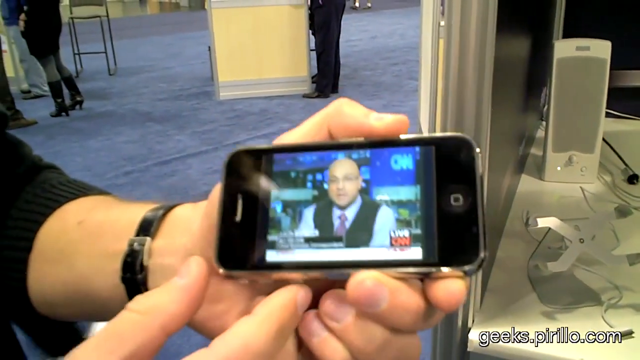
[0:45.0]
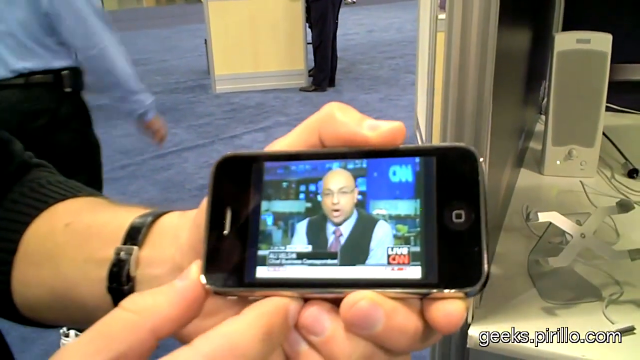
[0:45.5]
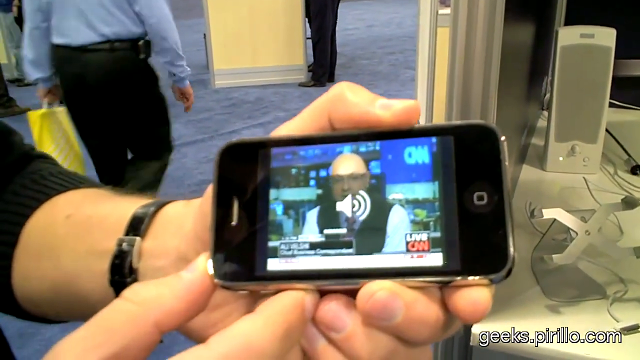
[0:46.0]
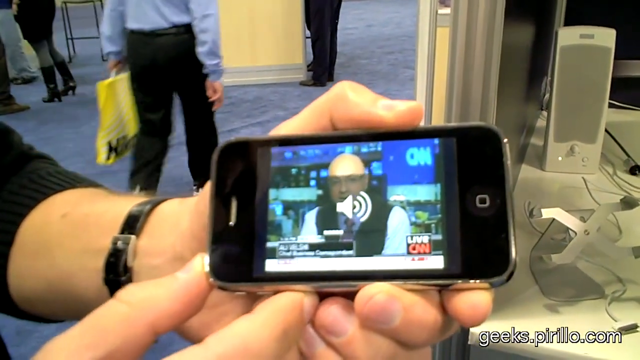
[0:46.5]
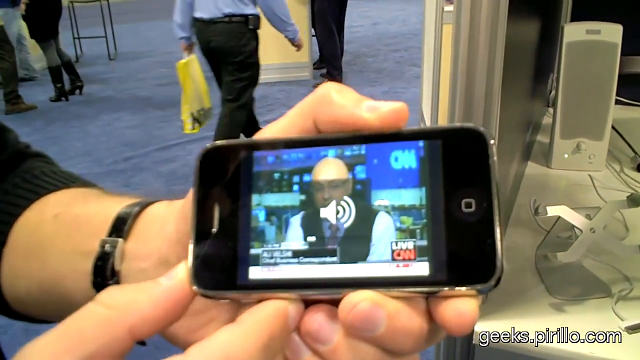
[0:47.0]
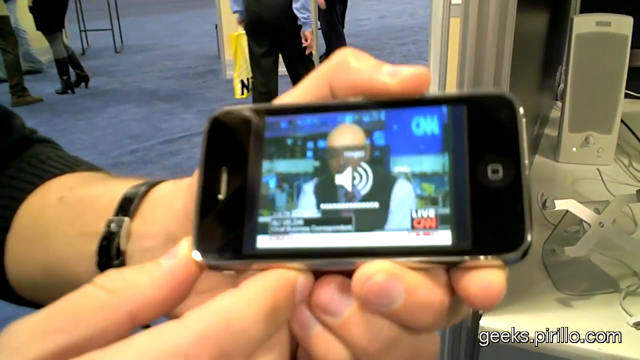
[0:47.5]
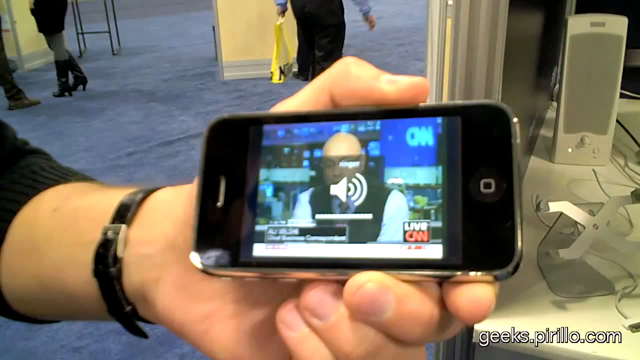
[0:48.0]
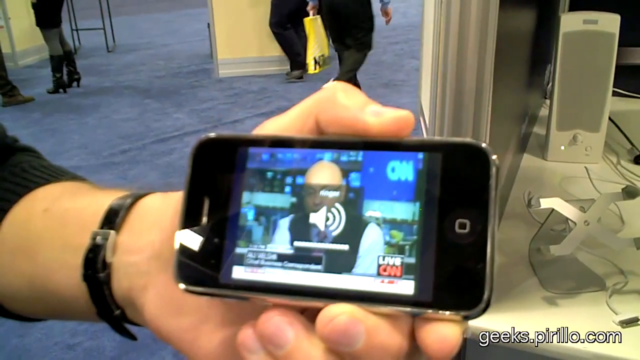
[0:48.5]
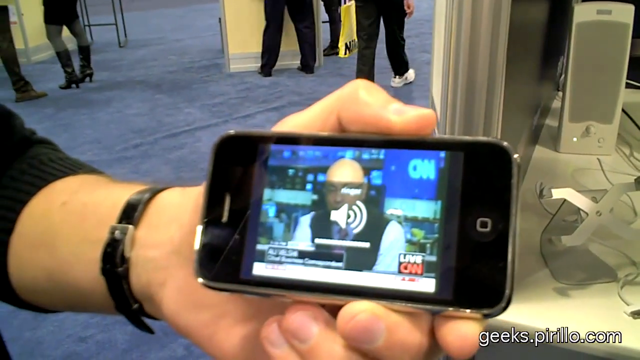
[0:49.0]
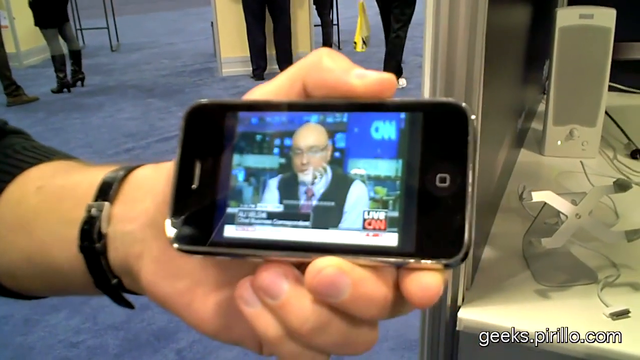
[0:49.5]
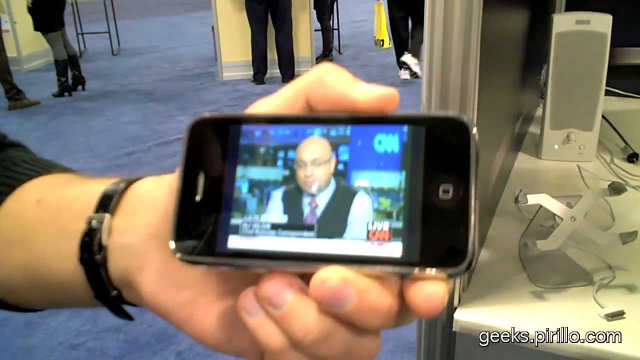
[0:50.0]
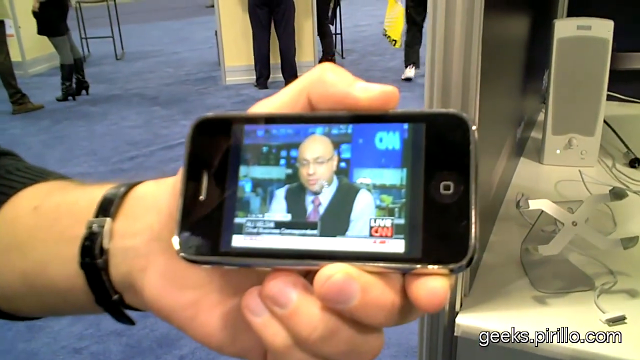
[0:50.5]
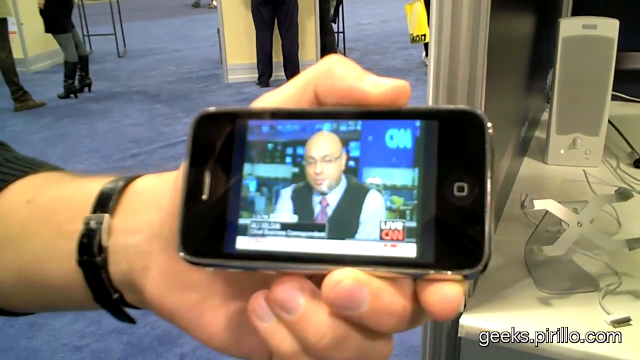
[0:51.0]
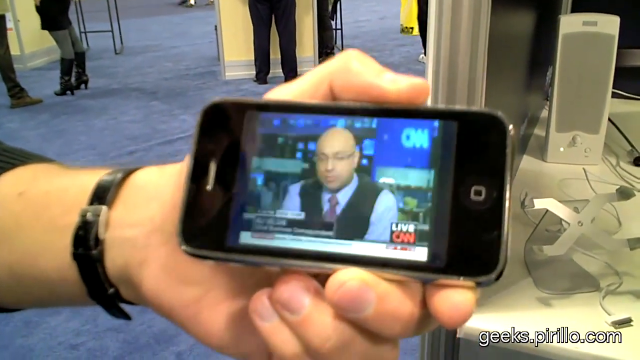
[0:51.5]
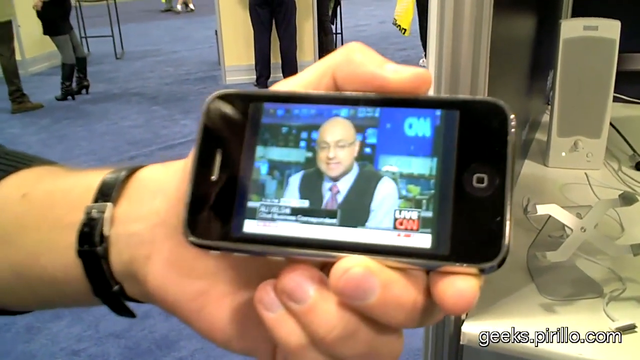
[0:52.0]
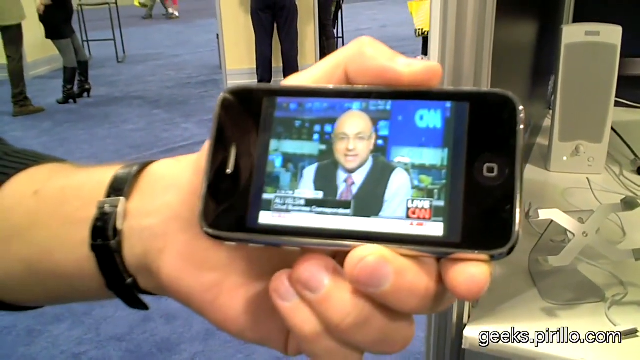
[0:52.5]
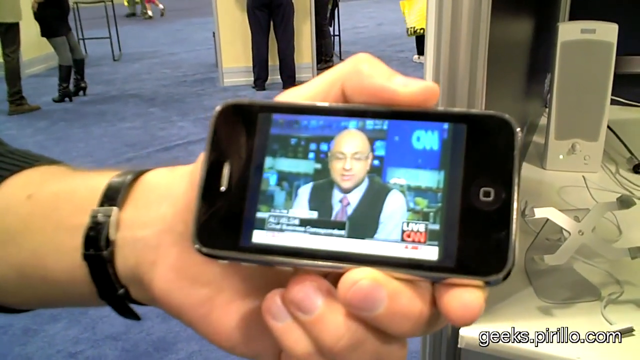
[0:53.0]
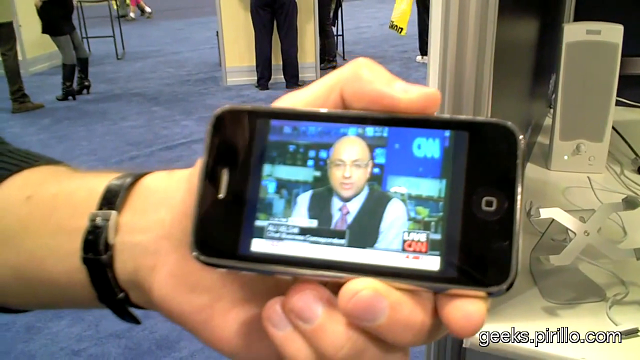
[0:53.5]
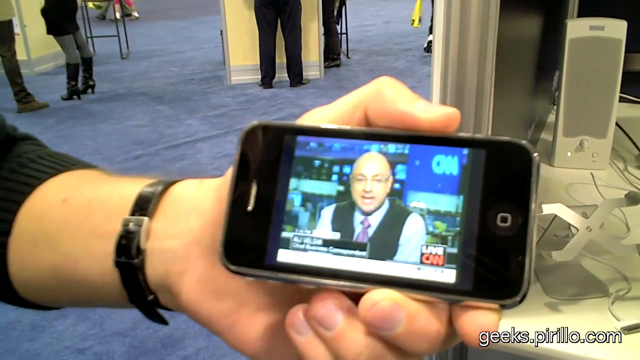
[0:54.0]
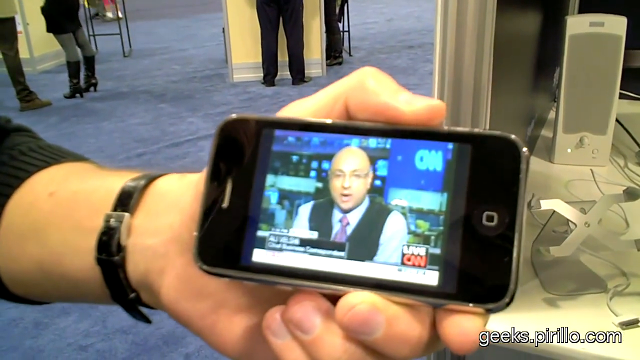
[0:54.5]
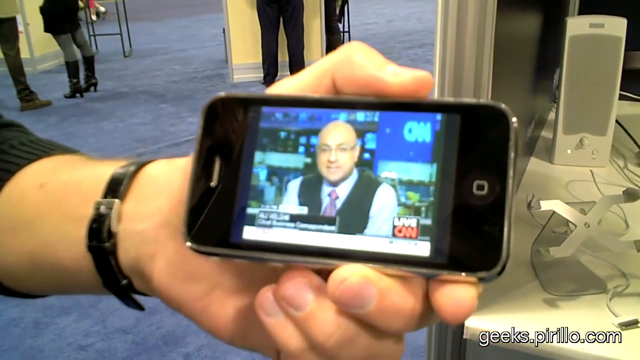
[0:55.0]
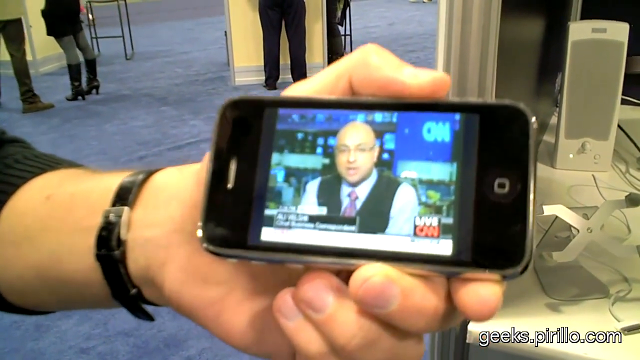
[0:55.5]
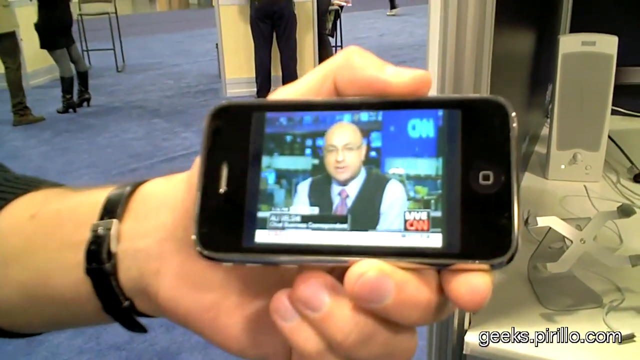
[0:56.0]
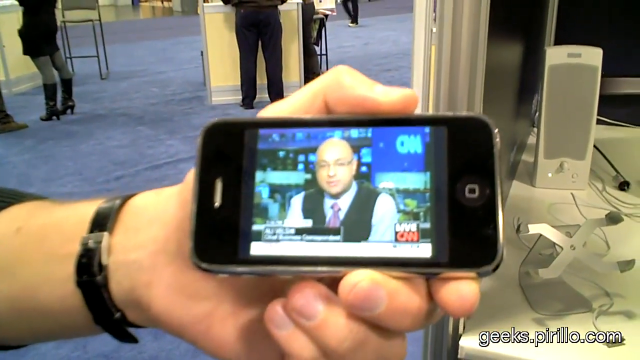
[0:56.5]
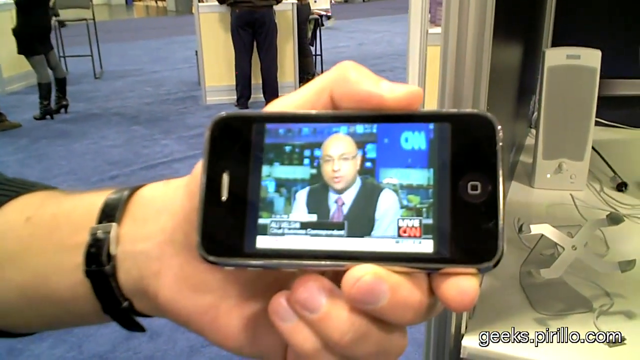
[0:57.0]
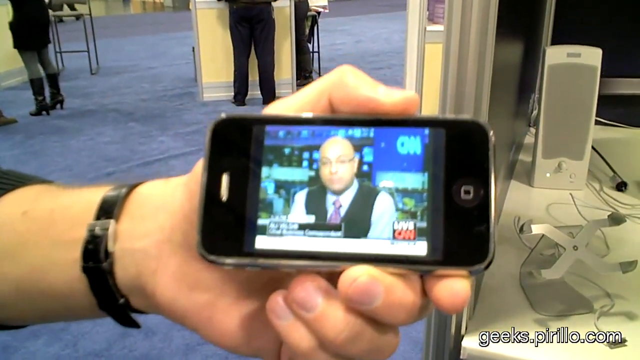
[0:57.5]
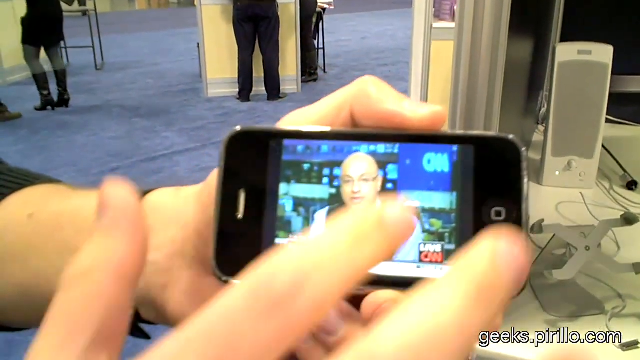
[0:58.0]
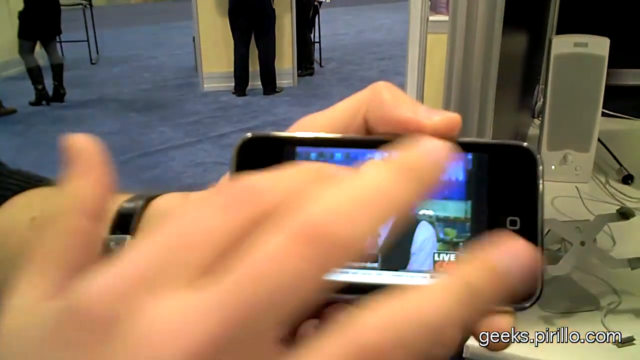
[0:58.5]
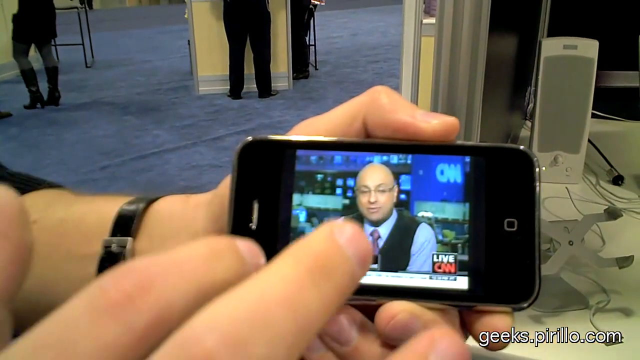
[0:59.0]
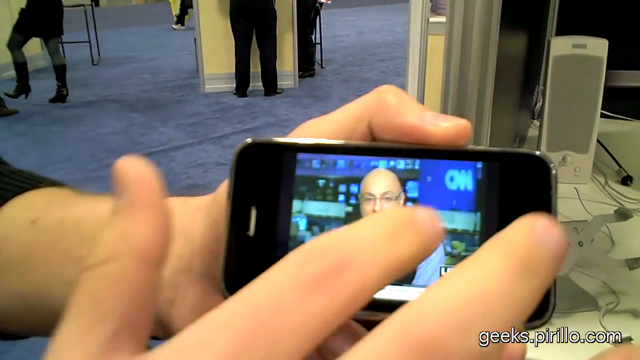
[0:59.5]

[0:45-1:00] At the same convention location, with the same blue carpet and part of the table with the speaker on, the Sling man holds the phone horizontally. The CNN news program plays on the iPhone as he raises its volume. He then slides his index finger across the horizontal screen twice, but the shot cuts off before the result of the swipes is shown.